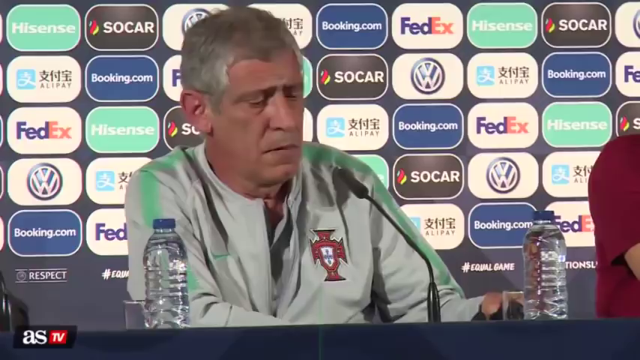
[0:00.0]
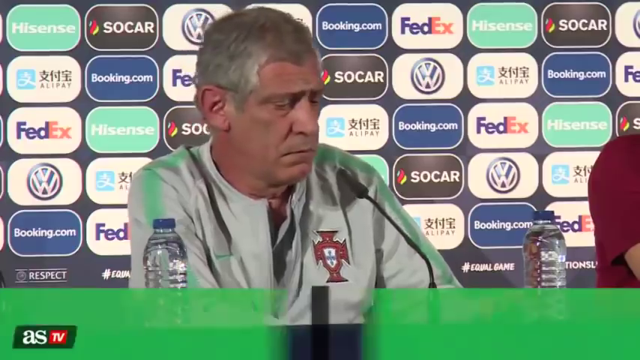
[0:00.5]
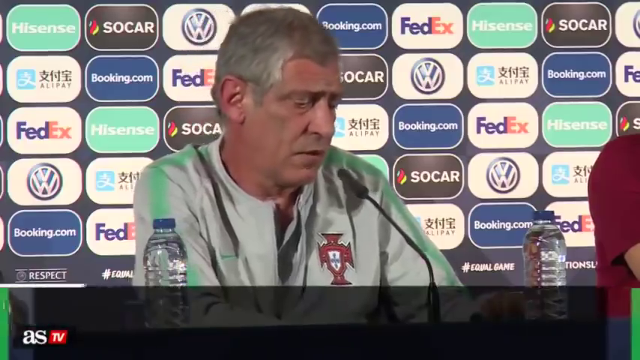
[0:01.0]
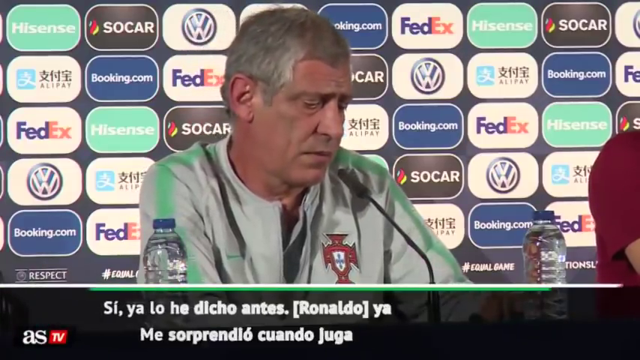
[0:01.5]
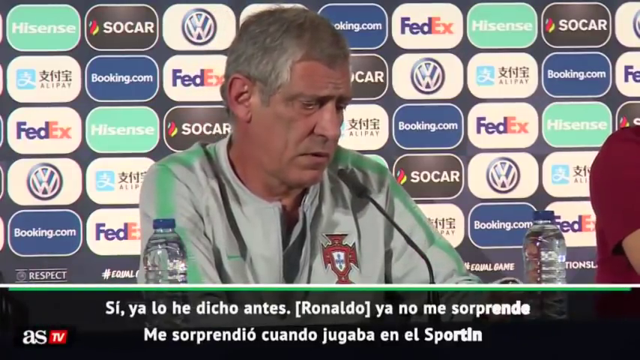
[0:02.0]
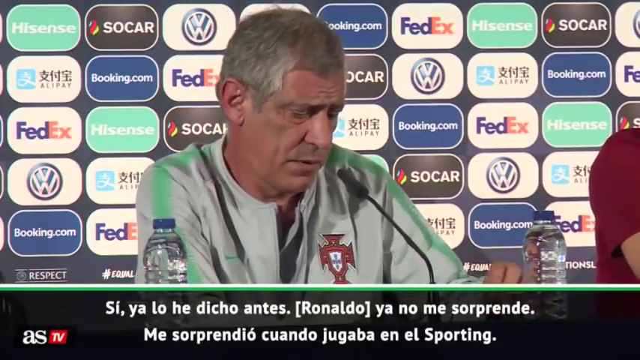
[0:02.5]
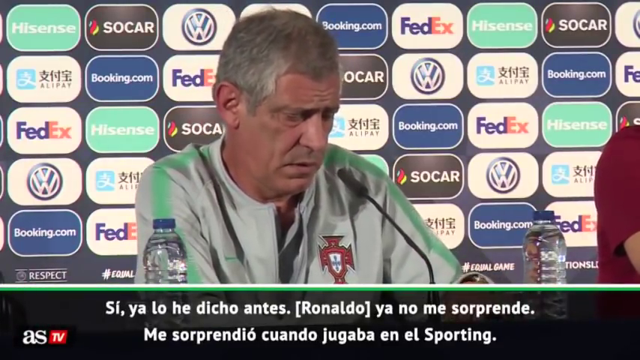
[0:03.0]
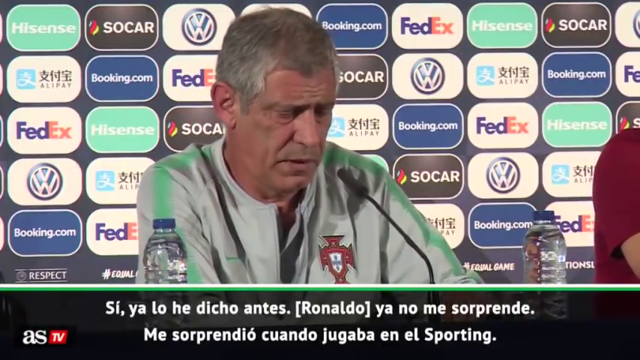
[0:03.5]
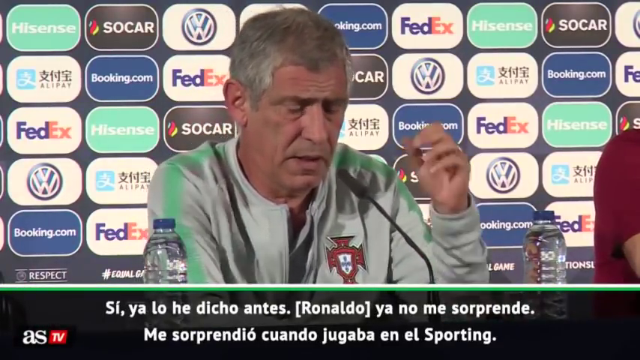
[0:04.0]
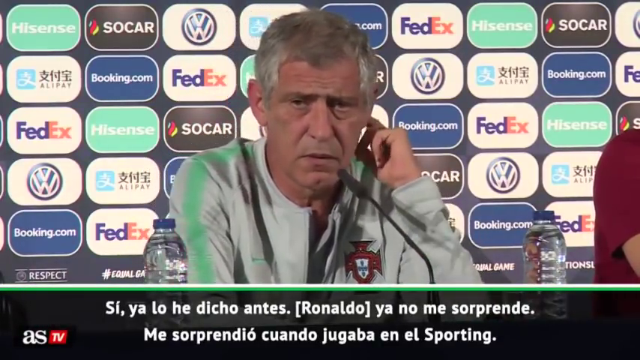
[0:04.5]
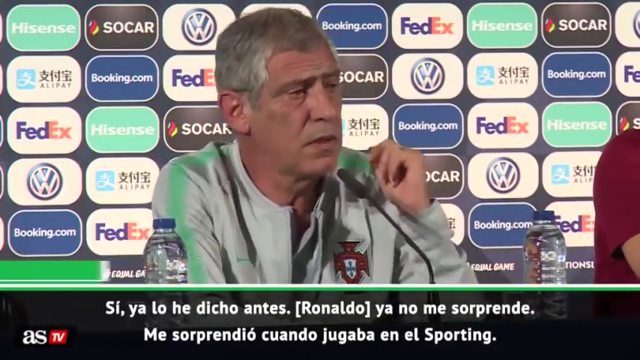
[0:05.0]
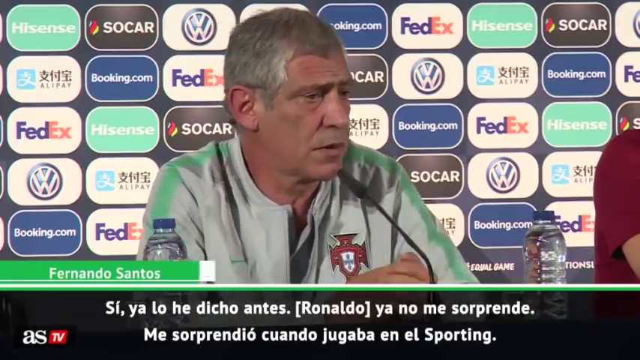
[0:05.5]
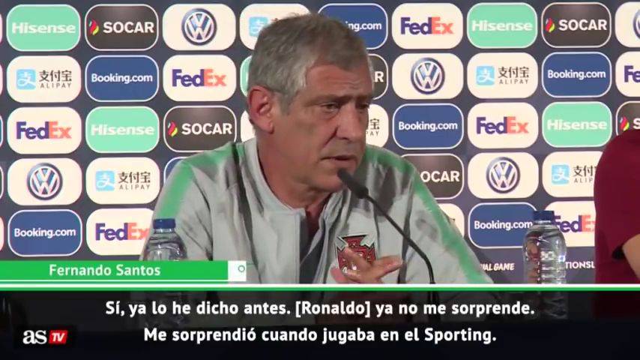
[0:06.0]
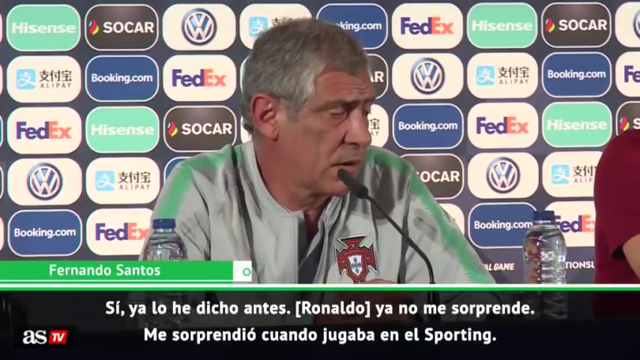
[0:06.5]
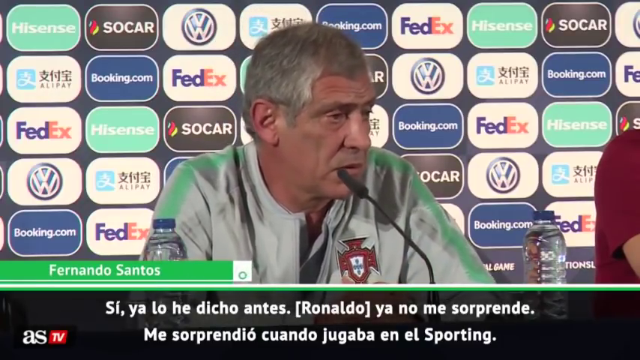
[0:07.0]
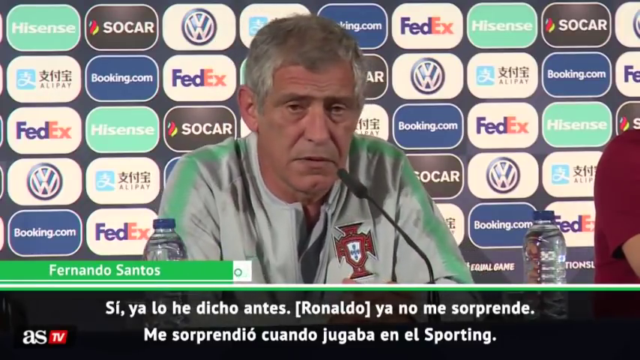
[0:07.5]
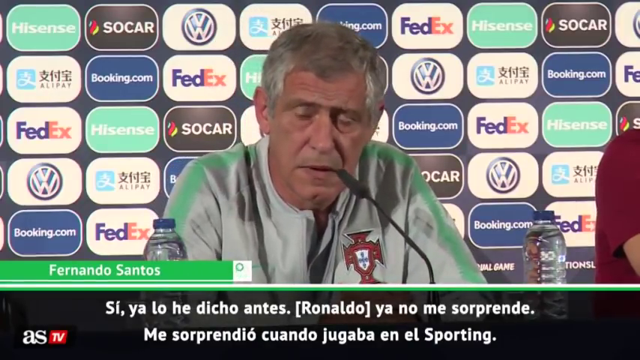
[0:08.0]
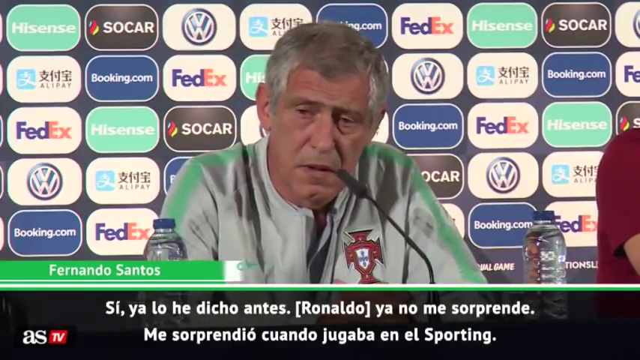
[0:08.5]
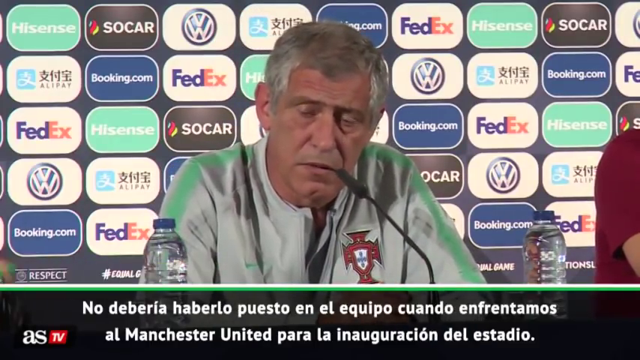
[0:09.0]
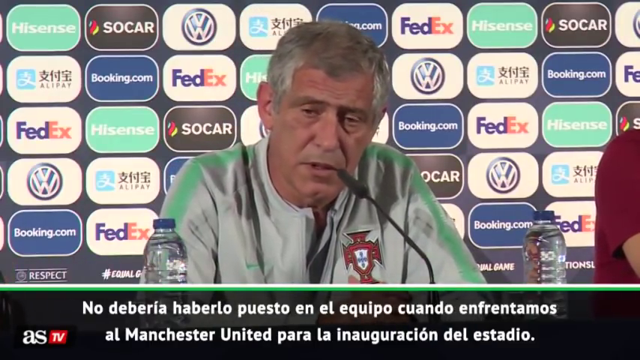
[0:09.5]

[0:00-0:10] An older gentleman appears on screen with short white hair and olive skin; he appears to be looking down. A microphone that looks kind of like a thin rod with a cylindrical black tip is right in front of his mouth, and he speaks into it. He seems to be behind a table. He is visible only from the chest up, including his shoulders, and he looks like he is about to raise his right arm.